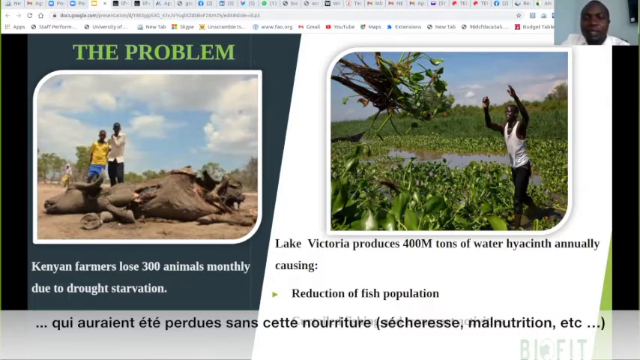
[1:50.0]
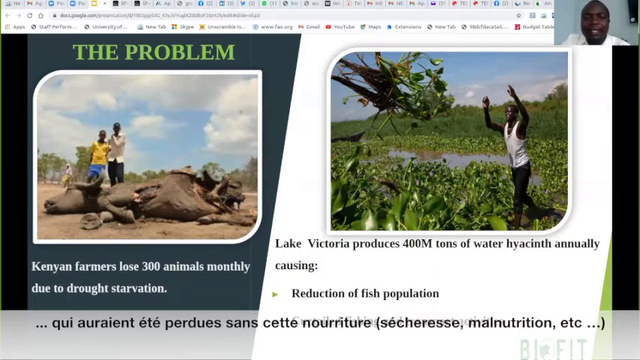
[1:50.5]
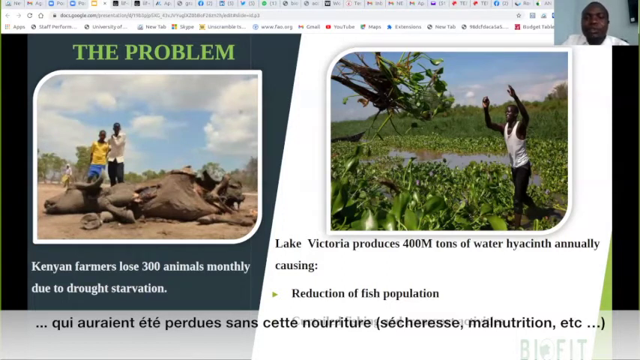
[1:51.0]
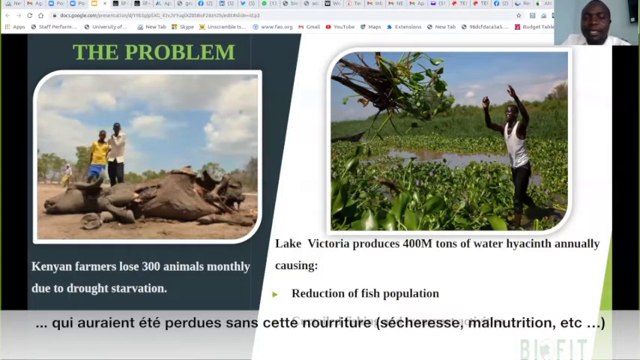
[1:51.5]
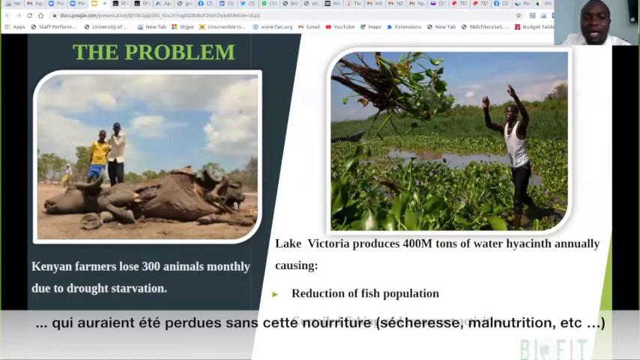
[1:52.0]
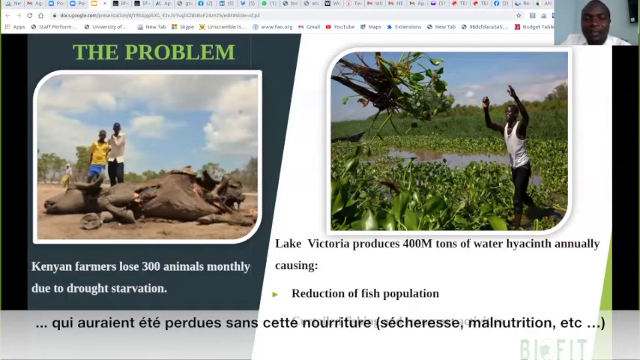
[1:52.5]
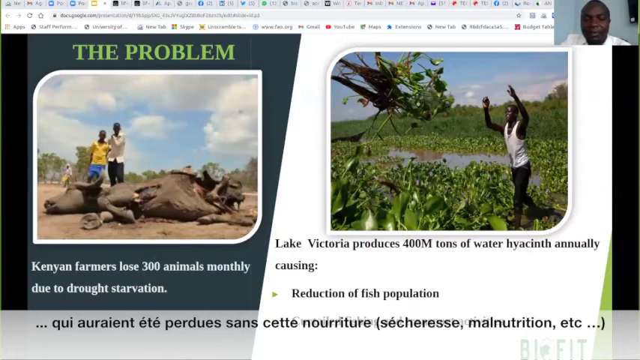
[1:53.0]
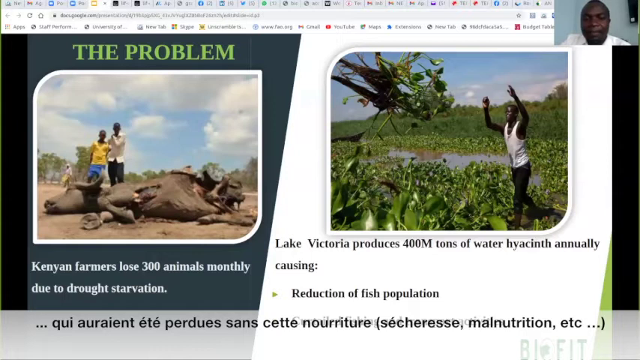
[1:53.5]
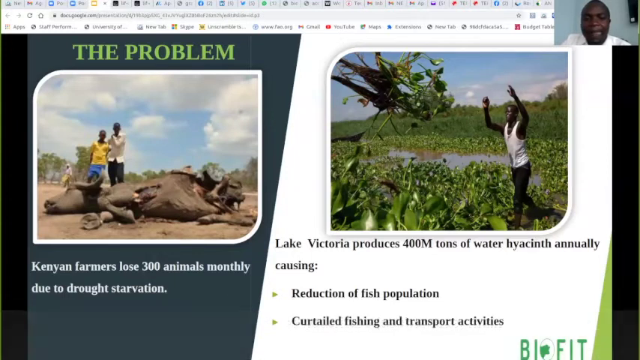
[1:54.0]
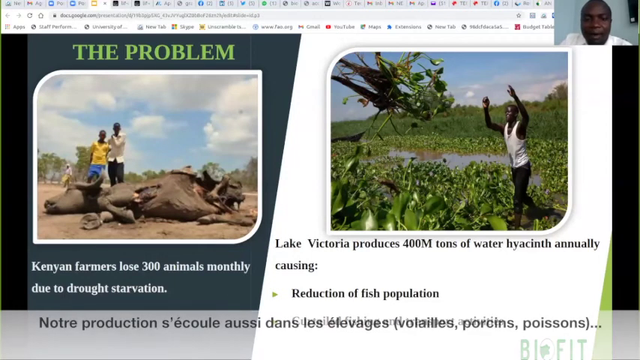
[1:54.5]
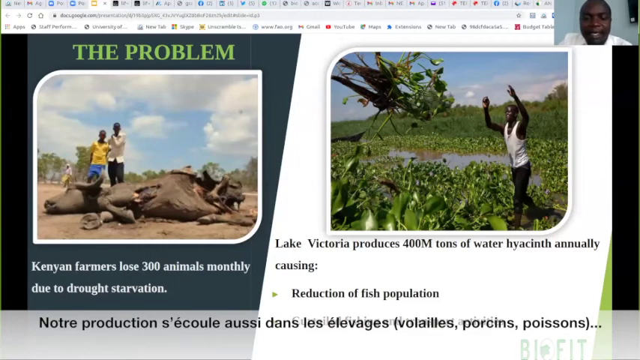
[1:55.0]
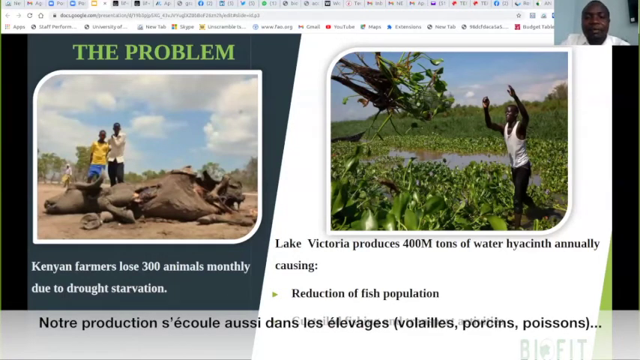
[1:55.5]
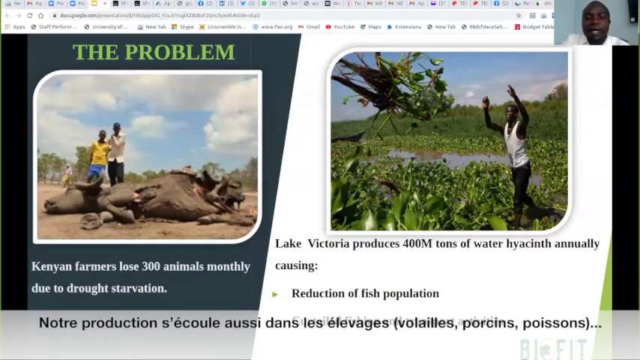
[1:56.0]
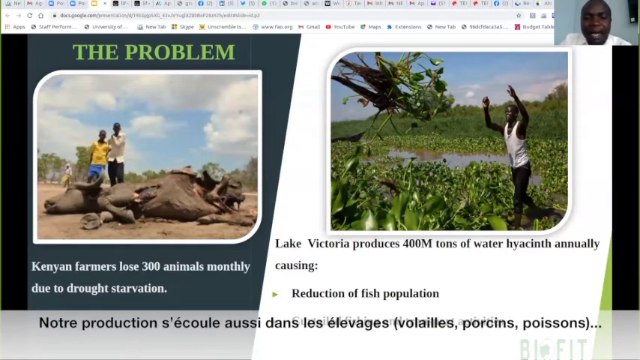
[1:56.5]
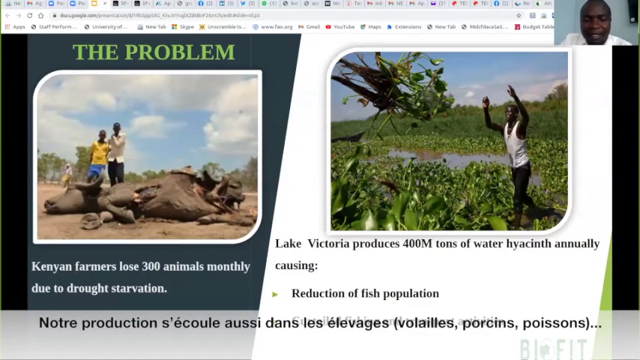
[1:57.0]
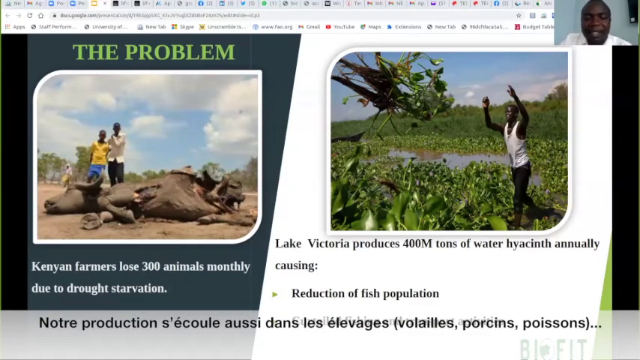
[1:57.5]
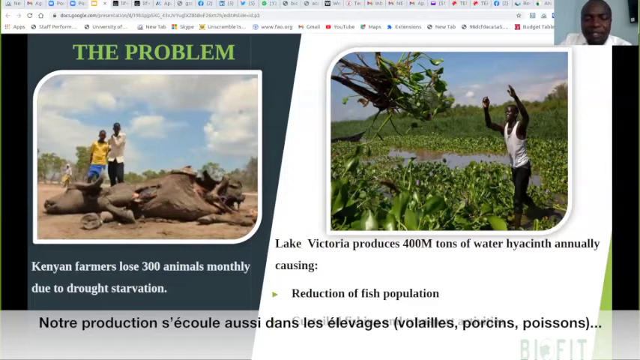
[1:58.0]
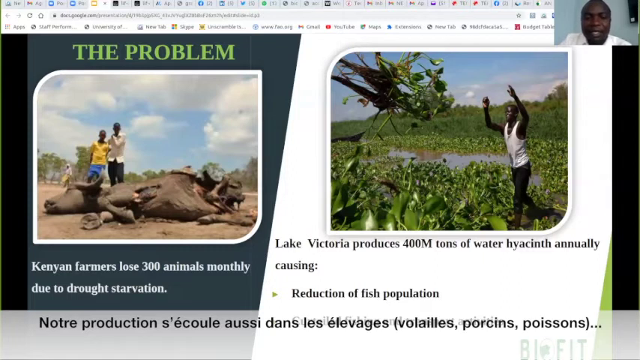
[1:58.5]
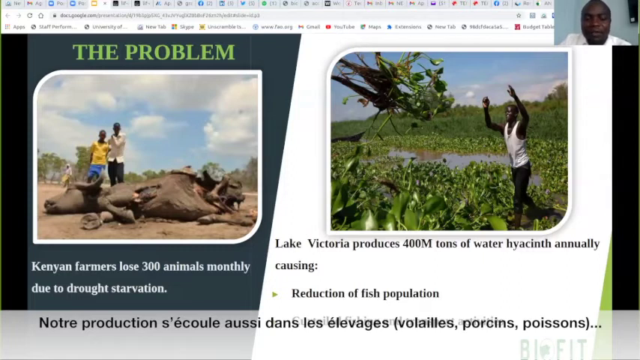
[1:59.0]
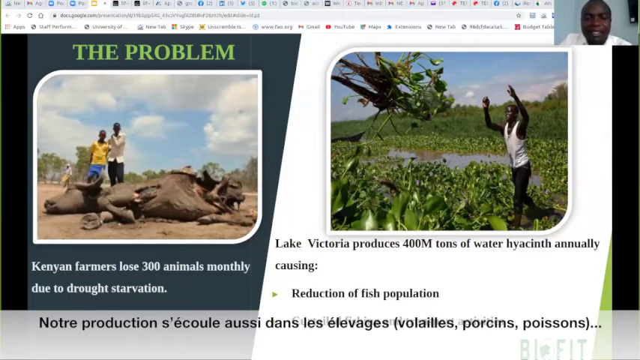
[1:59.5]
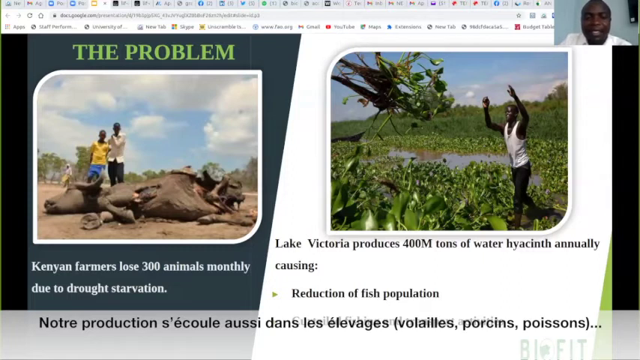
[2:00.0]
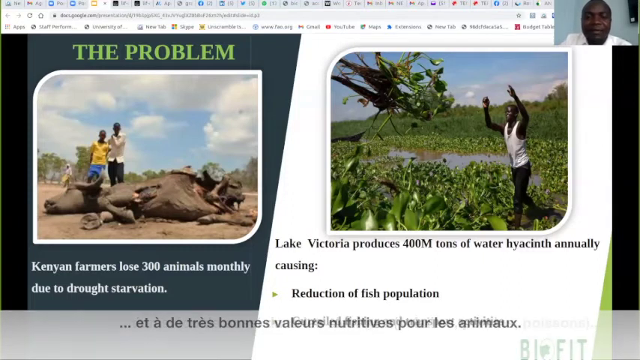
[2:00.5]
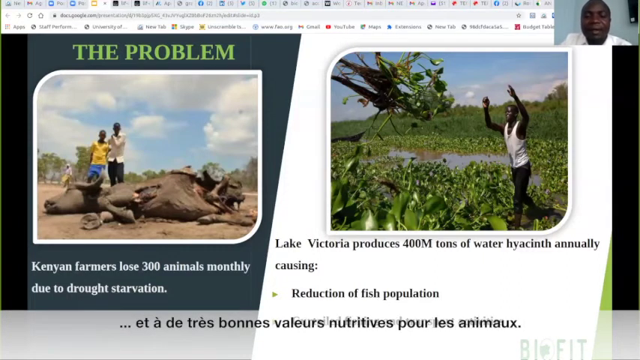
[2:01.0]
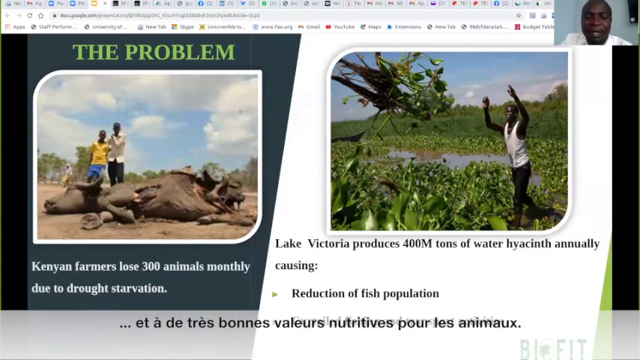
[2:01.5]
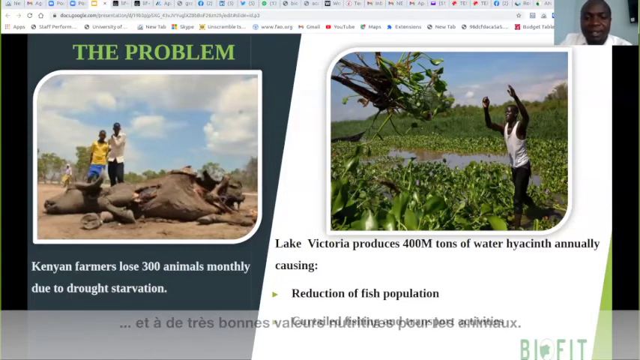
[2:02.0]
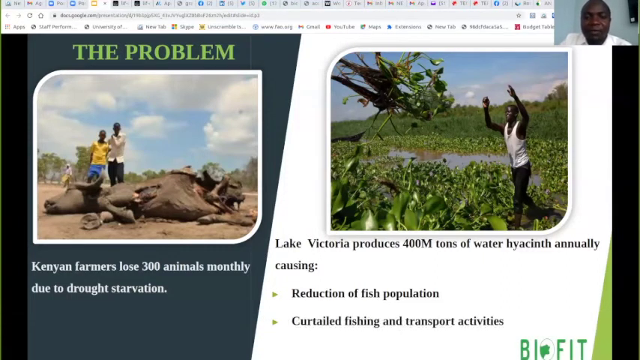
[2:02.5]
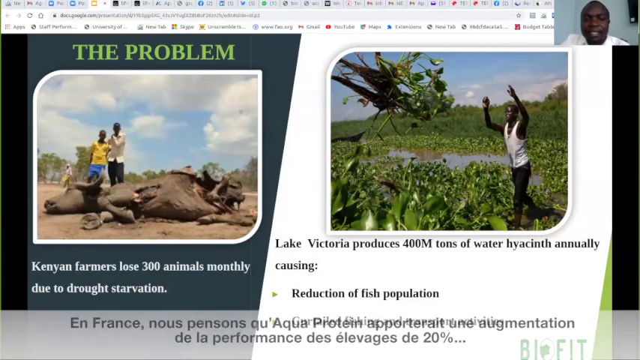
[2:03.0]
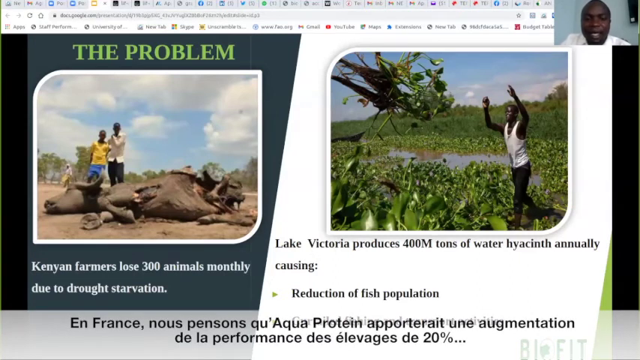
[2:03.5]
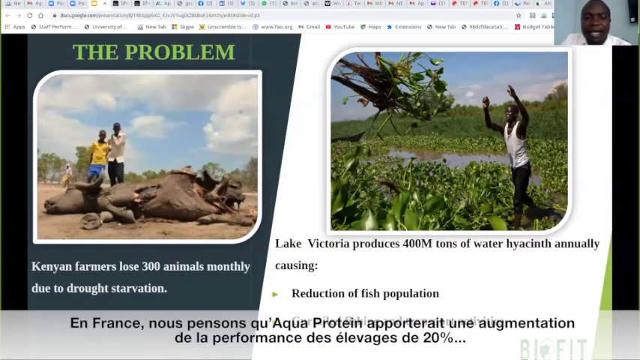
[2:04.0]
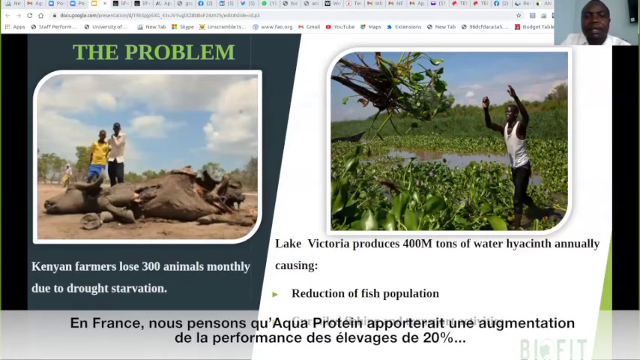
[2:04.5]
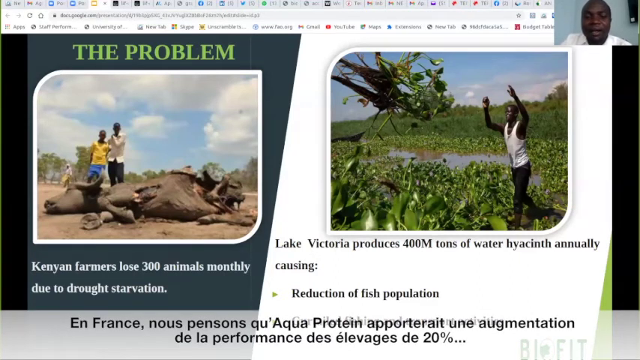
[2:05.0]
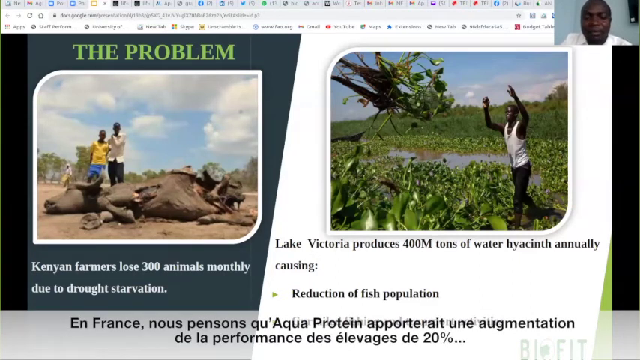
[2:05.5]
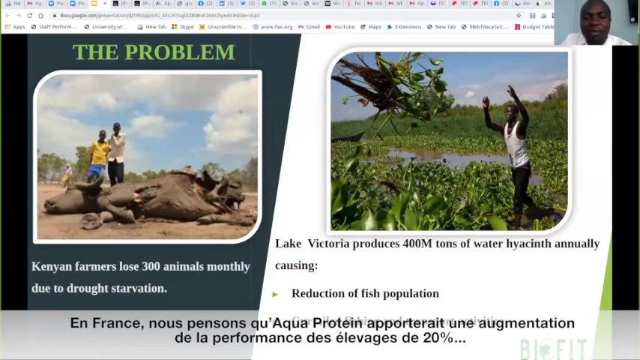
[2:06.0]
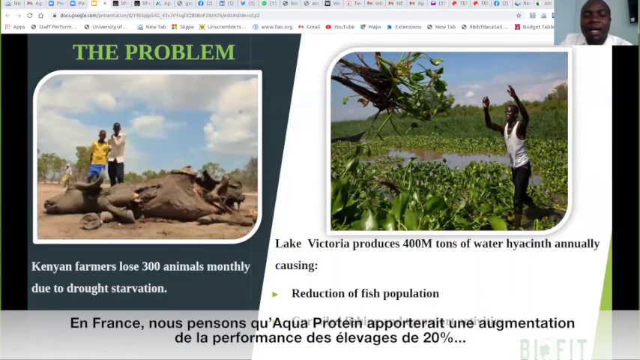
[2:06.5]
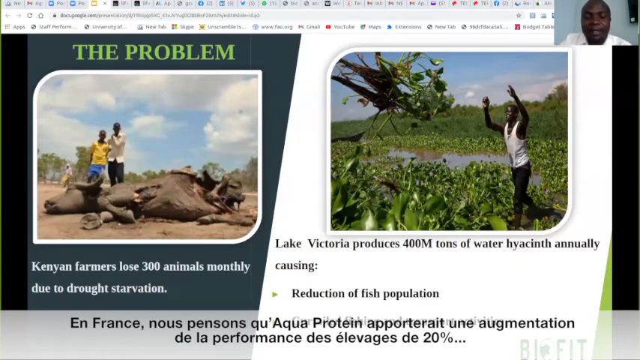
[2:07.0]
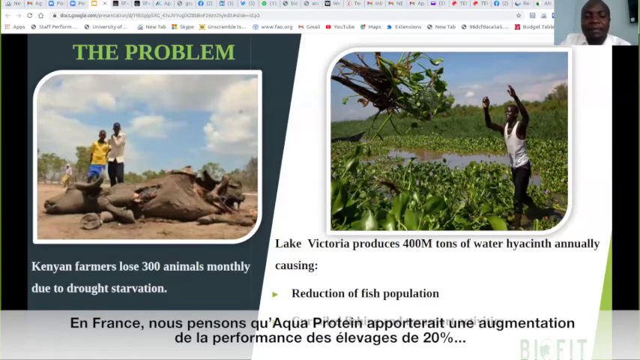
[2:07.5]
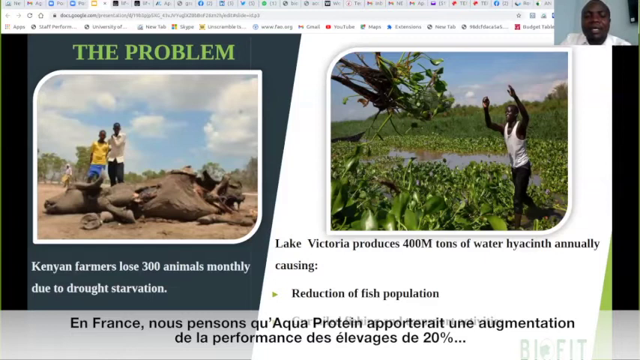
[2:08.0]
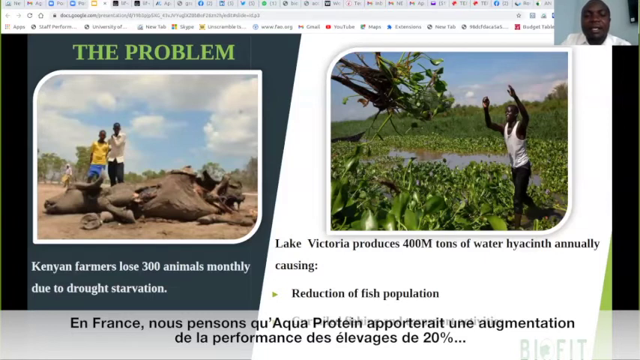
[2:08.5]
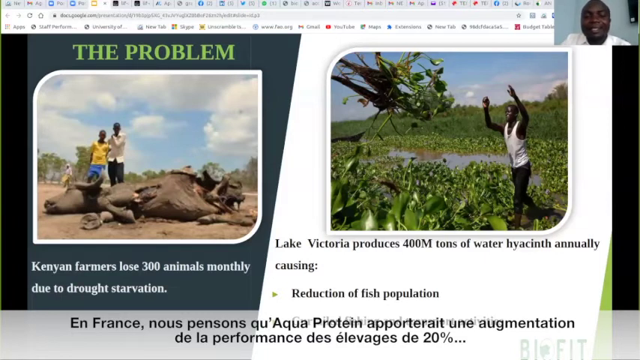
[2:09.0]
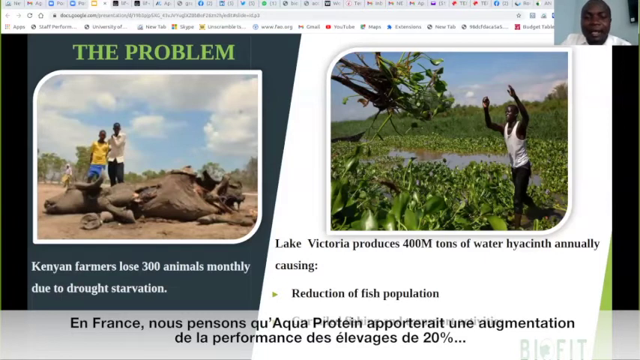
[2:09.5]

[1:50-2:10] The same slides remain on screen. There is mention of a school working on looking at the fish and the animals. Aqua protein appears to be the biofeed. Text covers advantages and how the product will be used. The man giving the presentation continues.